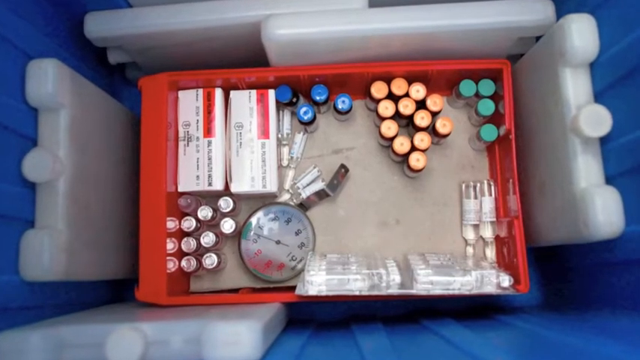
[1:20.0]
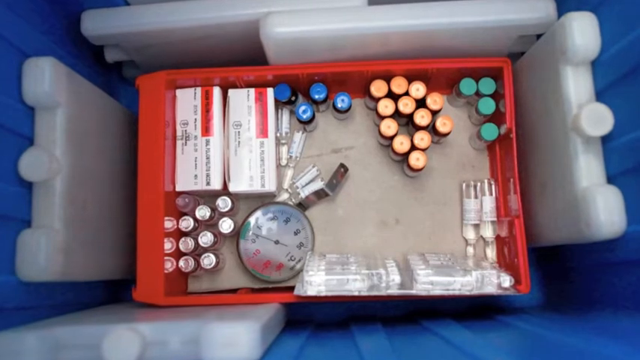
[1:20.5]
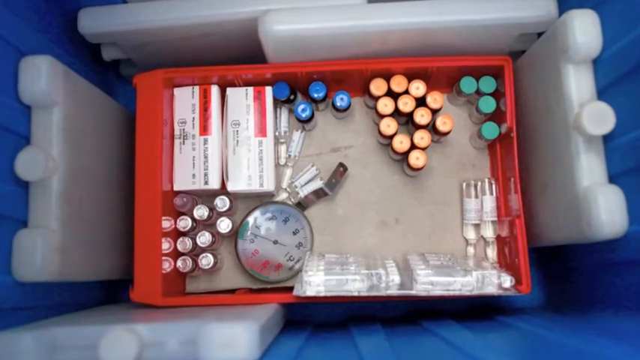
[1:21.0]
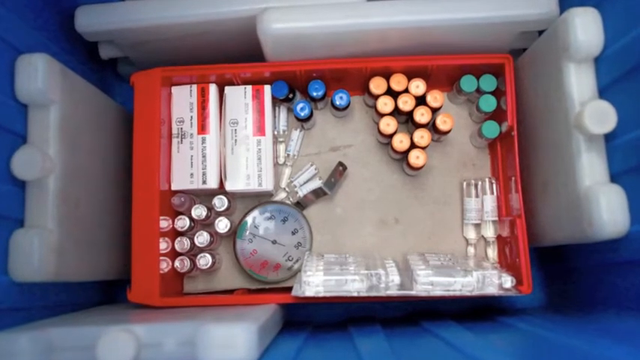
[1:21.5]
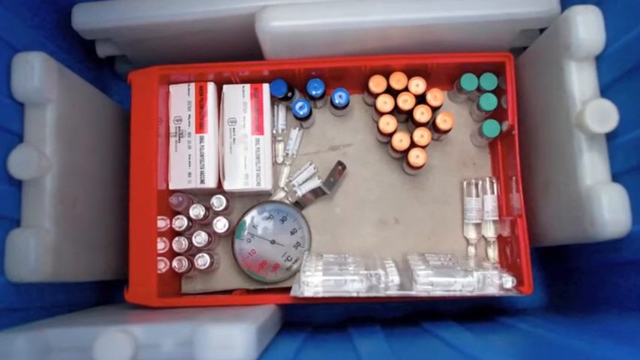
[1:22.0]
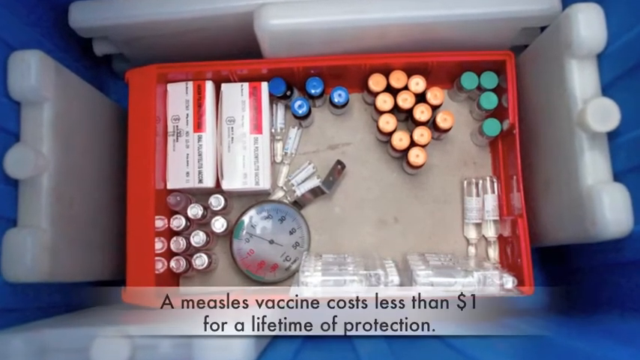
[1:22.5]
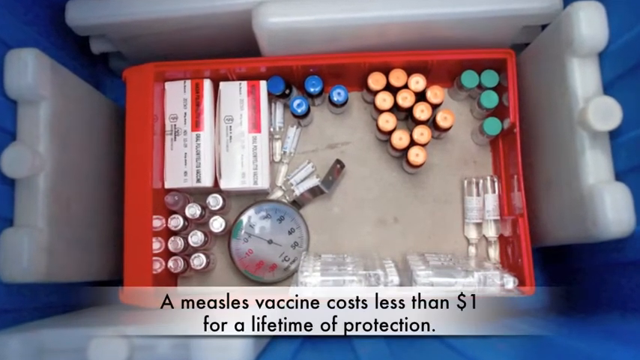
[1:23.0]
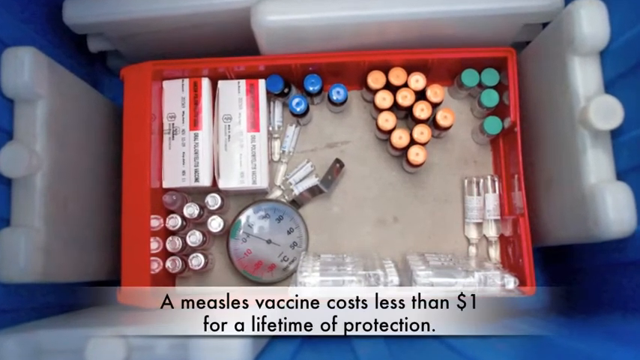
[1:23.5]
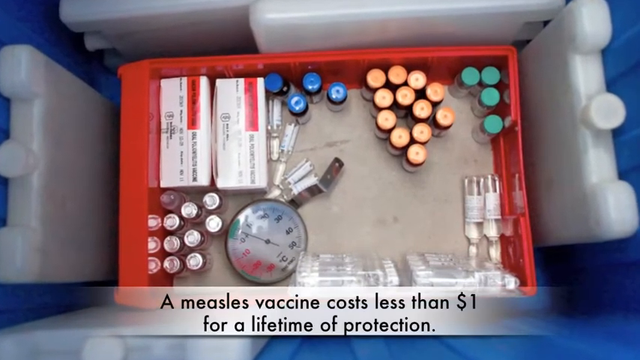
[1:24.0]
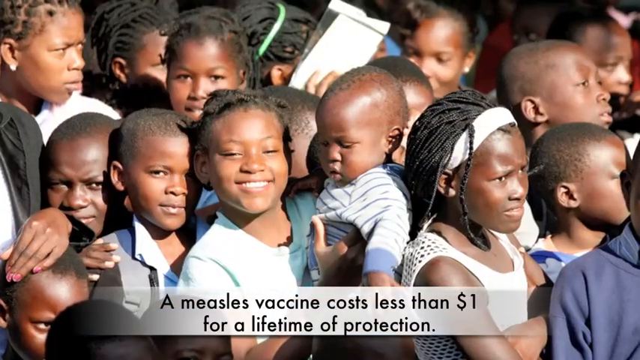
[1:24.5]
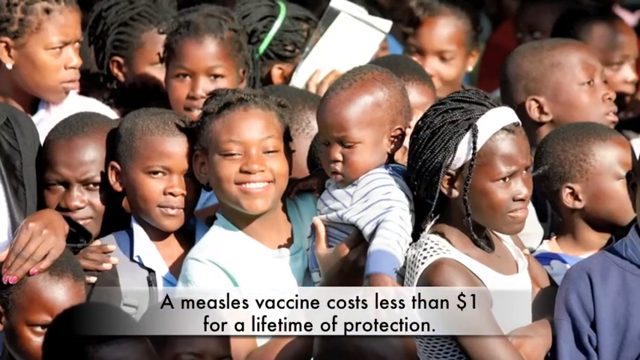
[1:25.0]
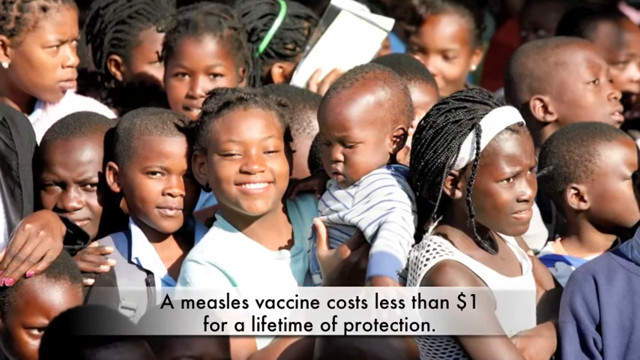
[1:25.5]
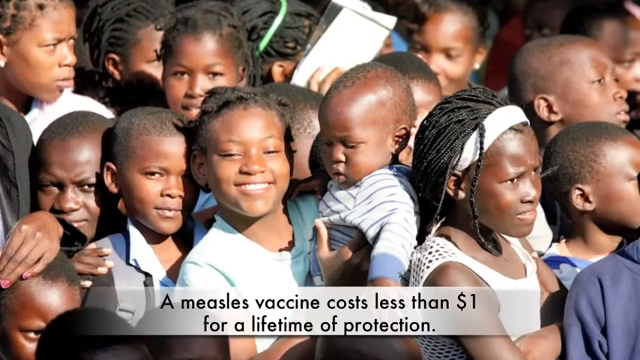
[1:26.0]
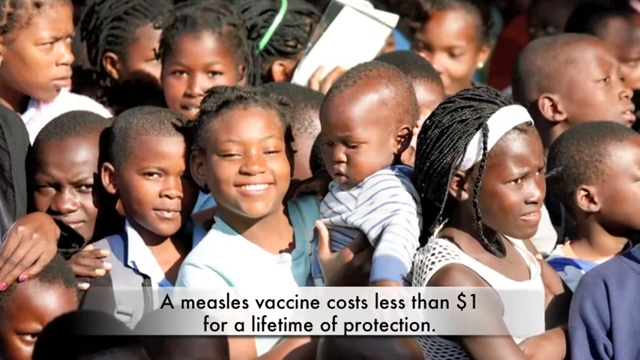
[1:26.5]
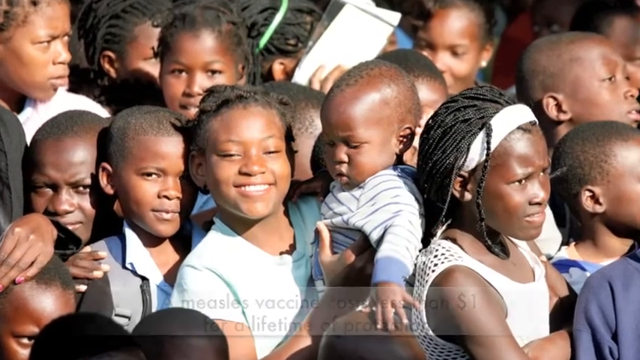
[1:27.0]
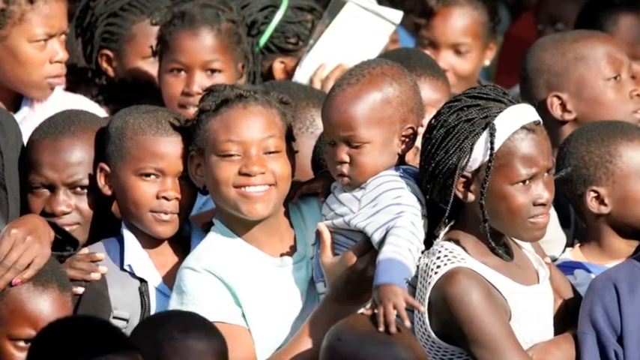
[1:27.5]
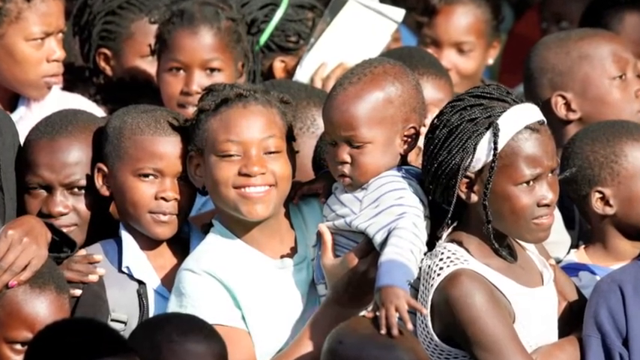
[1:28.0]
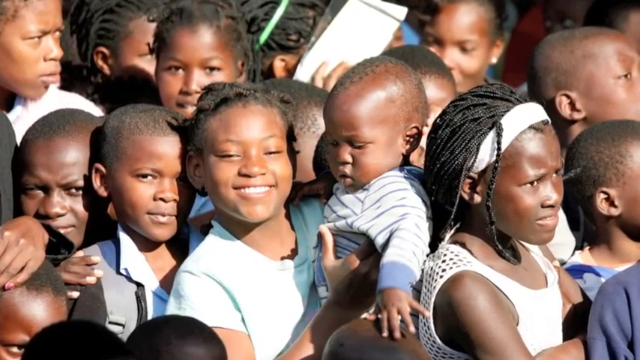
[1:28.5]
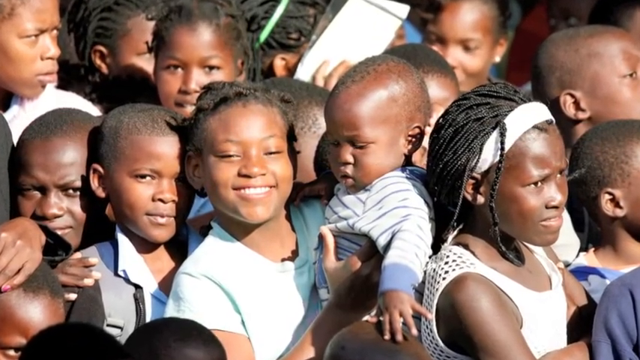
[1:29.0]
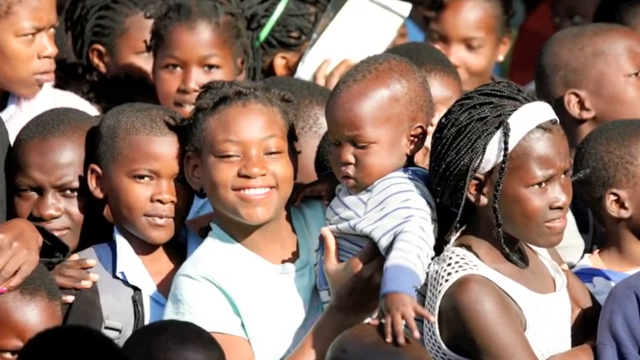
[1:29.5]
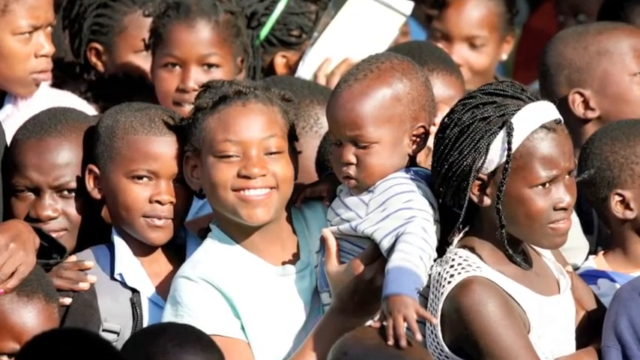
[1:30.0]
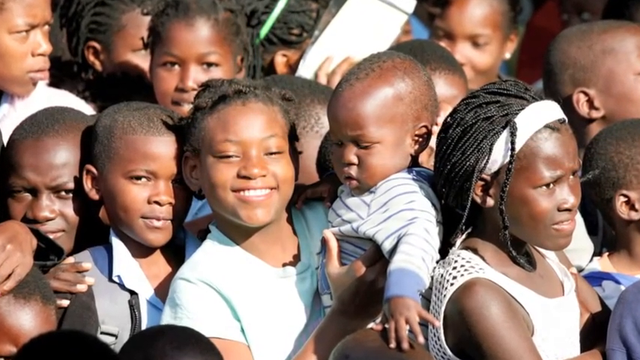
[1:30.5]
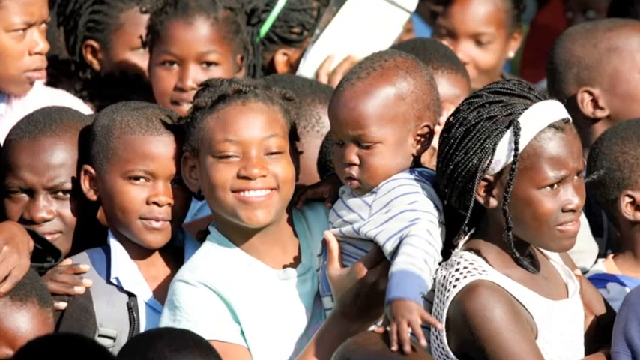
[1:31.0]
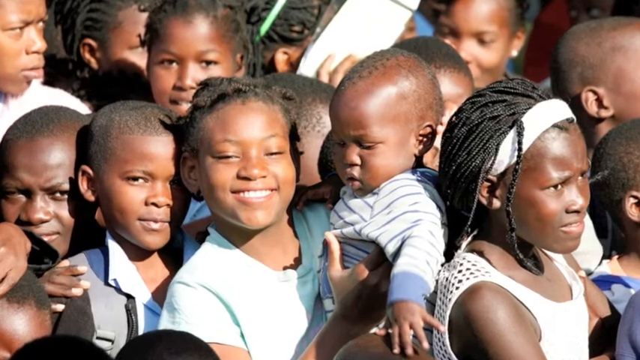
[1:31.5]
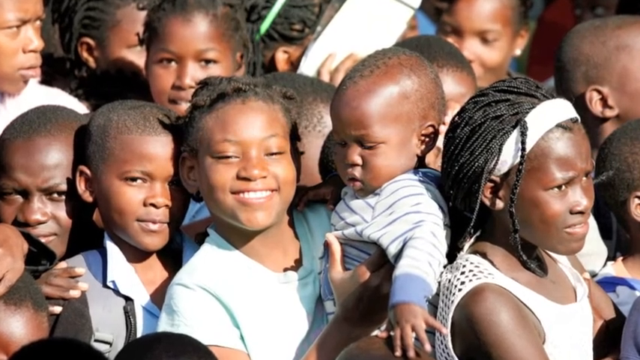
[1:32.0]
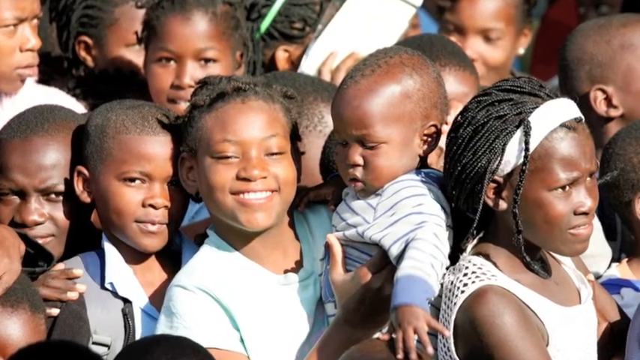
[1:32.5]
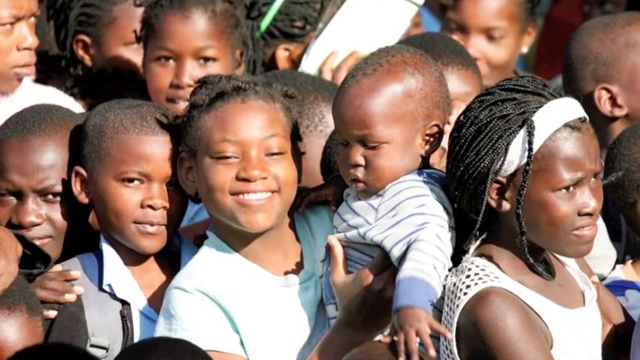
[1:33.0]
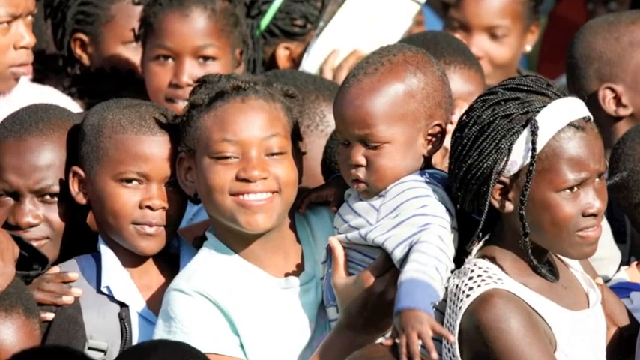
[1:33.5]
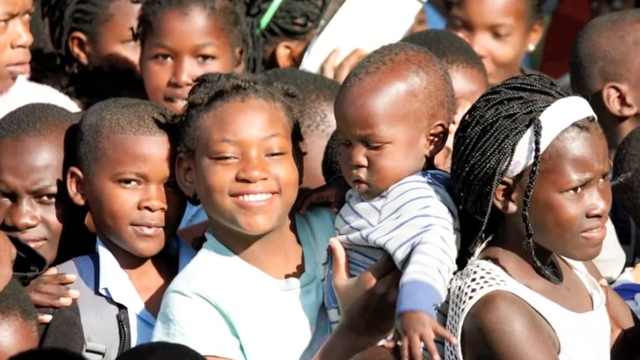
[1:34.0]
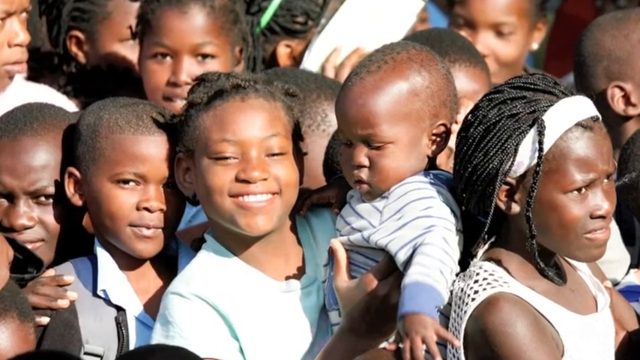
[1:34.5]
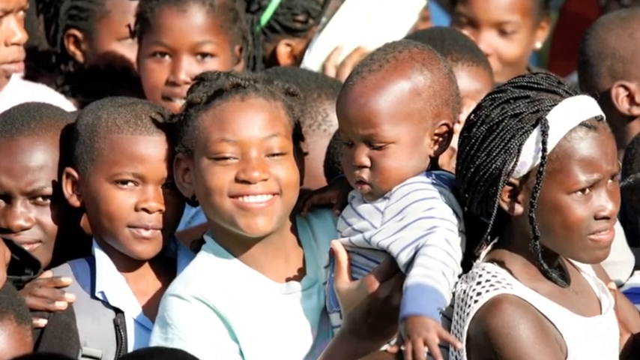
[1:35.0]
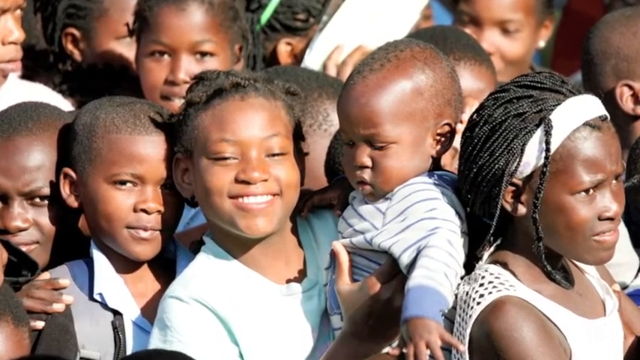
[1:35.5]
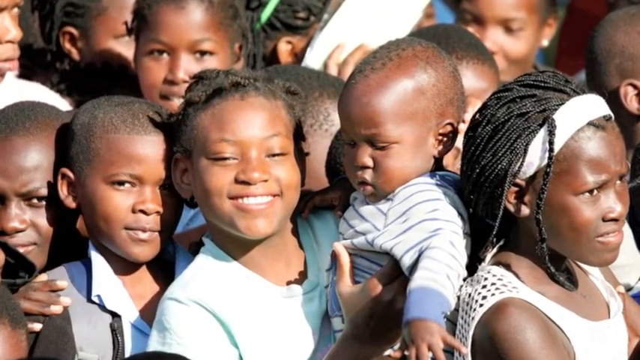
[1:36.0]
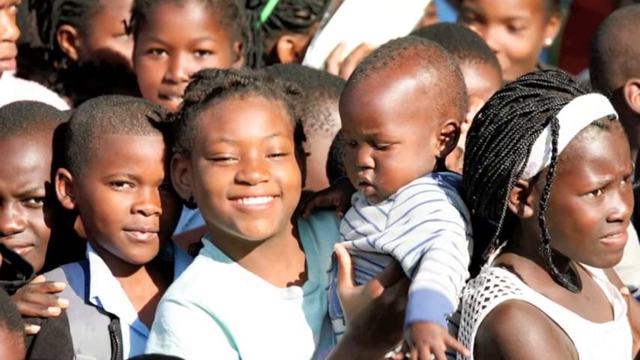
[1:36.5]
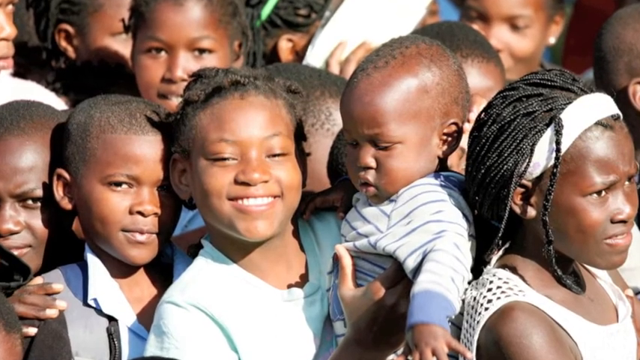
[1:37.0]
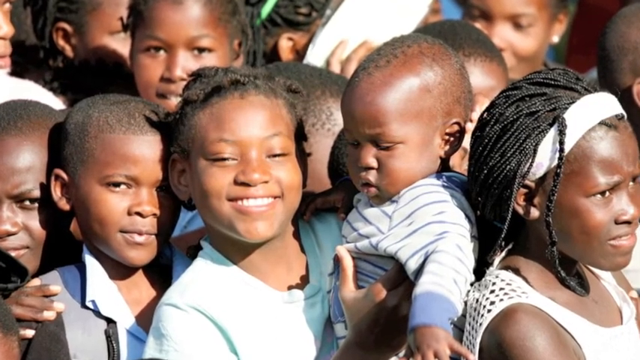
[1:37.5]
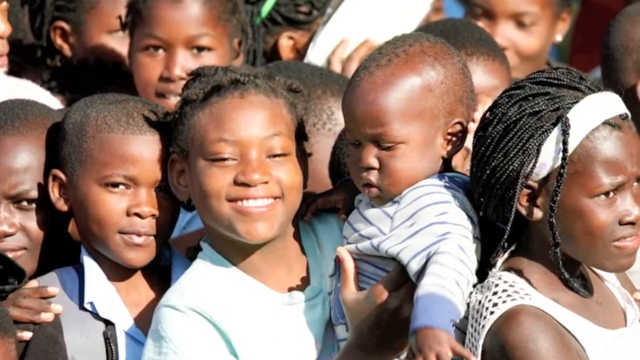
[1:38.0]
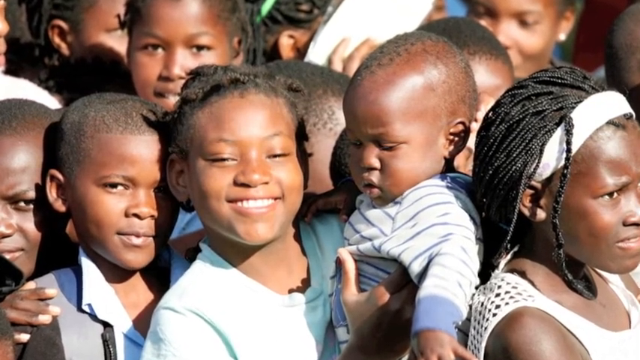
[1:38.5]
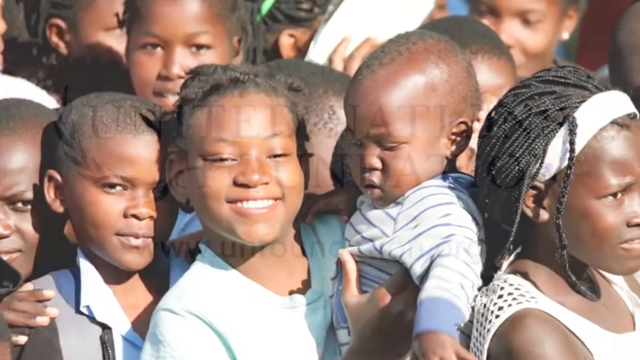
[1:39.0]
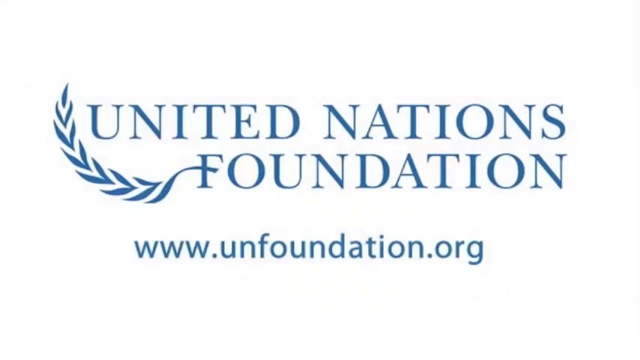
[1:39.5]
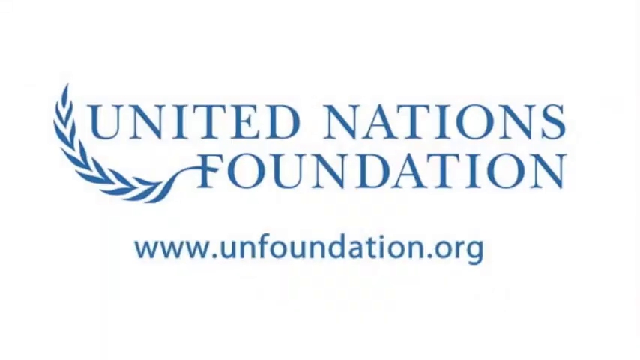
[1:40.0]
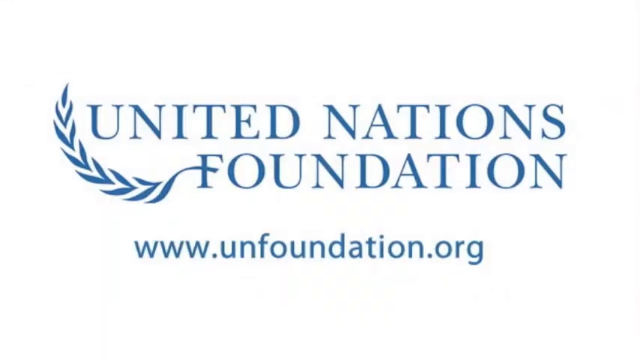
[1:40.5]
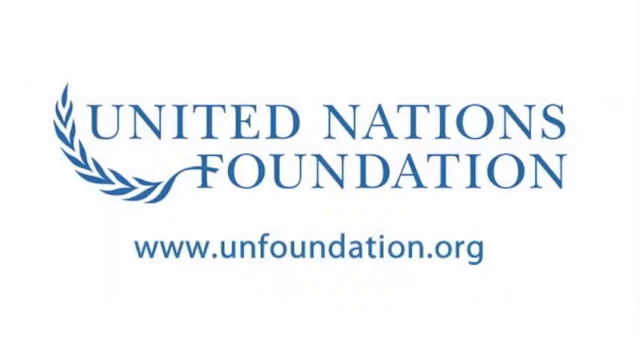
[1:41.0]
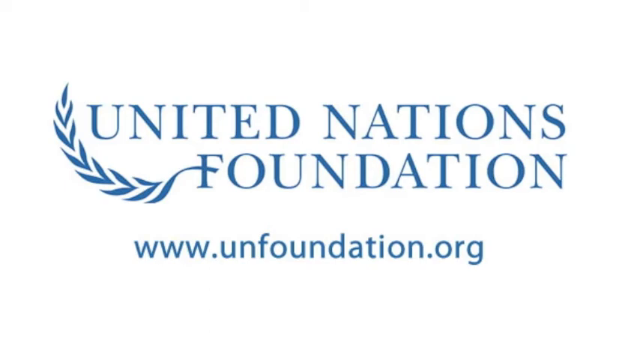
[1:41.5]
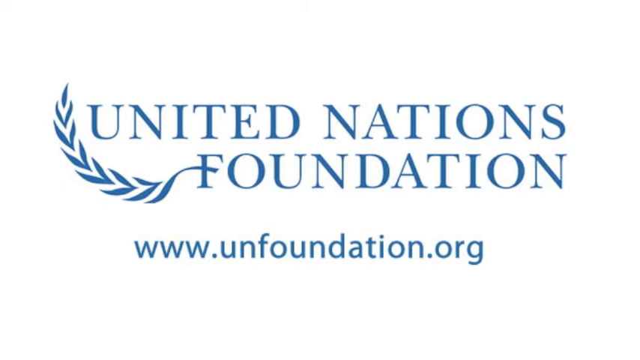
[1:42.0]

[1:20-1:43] A box containing measles vaccines is viewed from directly overhead, with ice packs around it. The box itself is red plastic. Inside, in the upper right corner, are four green-topped vials, then a group of orange-topped vials, and at the center top are four blue-topped vials. In the left corner are two boxes of medications, with a temperature gauge below them. Along the bottom are plastic-wrapped syringes. After a few seconds, a caption pops up in a translucent white text box along the bottom reading "a measles vaccine cost less than $1 for a lifetime of protection." The image fades out, leaving the caption, and changes to a large group of children whose faces fill the screen, with the crowd going all the way to the back in the center. The focus of the picture is a school-aged girl with a very bright smile, wearing a white T-shirt and facing directly into the camera. On her left side she is holding a baby, who faces toward the left of the screen and looks down toward the ground.